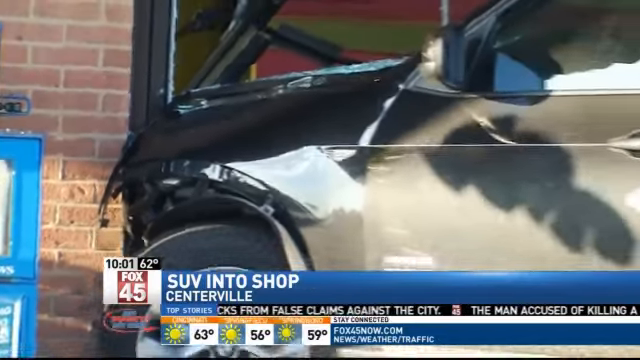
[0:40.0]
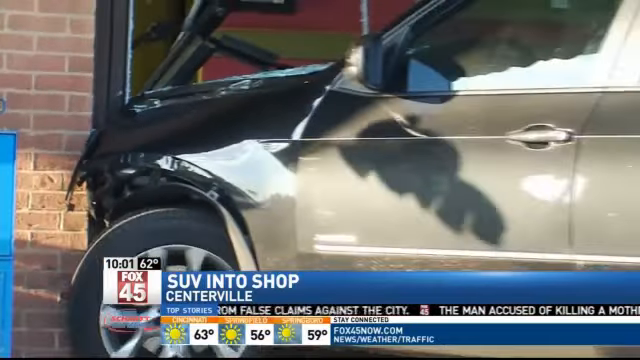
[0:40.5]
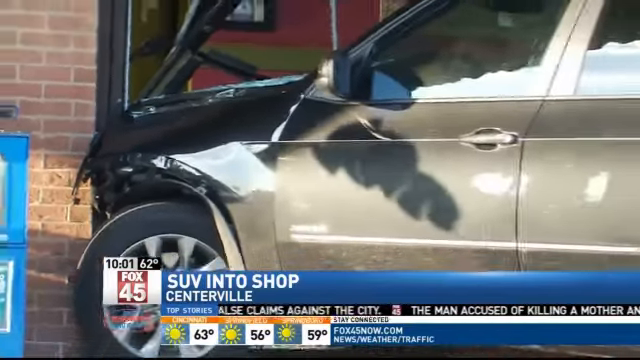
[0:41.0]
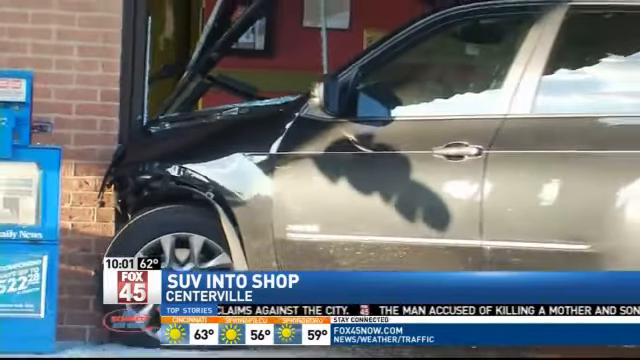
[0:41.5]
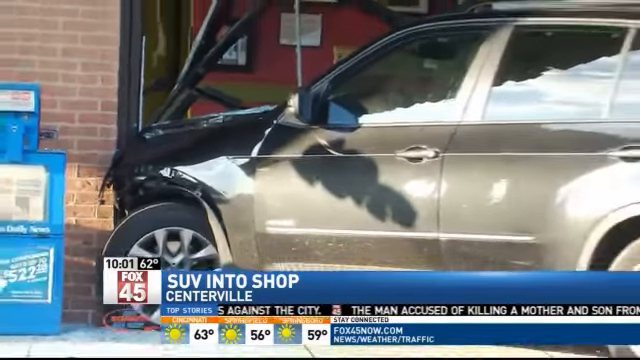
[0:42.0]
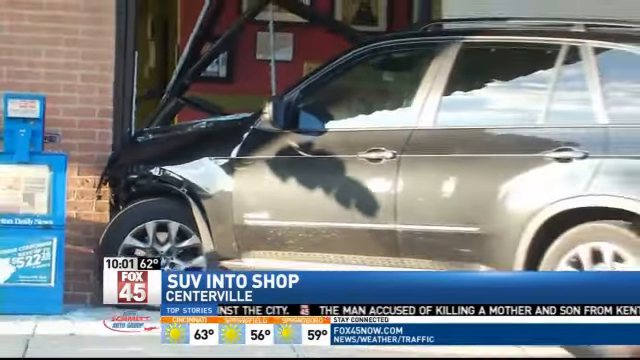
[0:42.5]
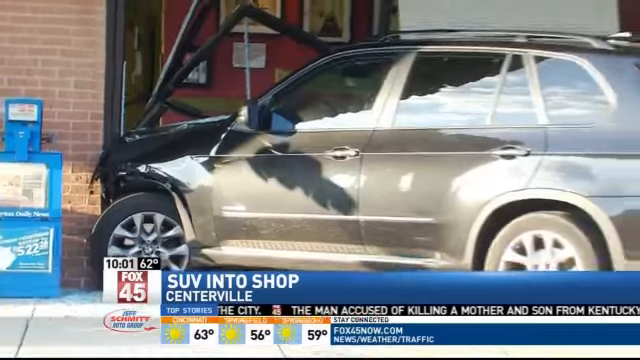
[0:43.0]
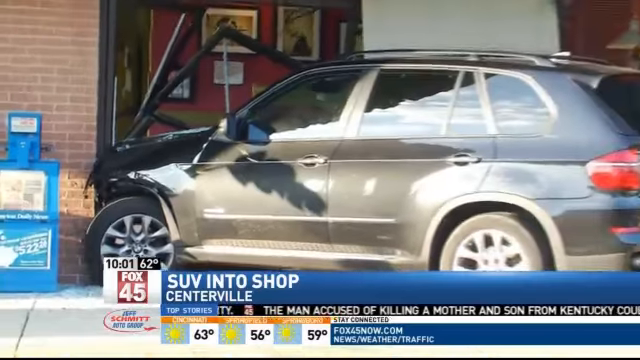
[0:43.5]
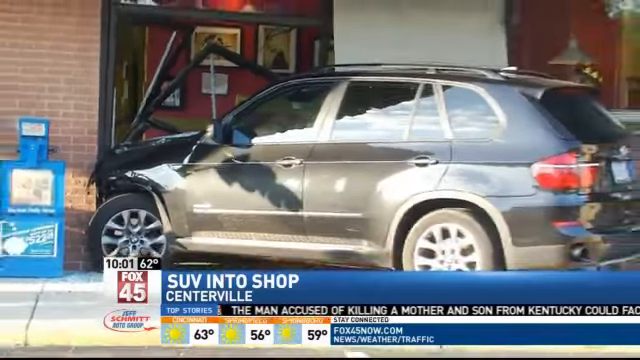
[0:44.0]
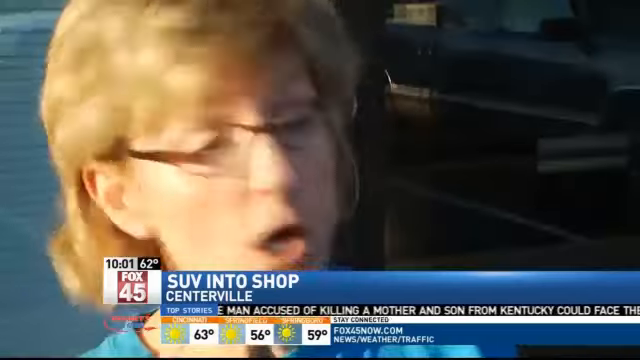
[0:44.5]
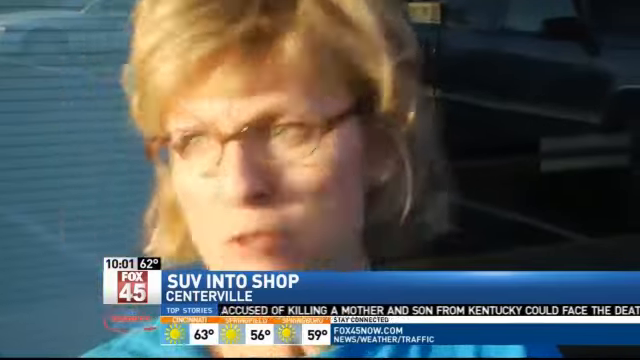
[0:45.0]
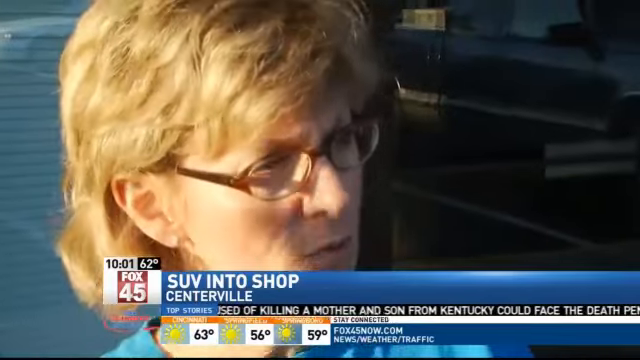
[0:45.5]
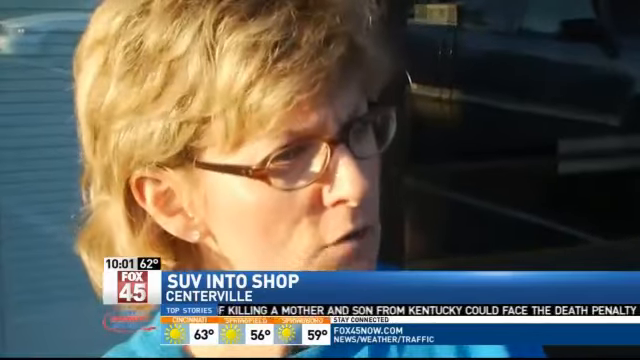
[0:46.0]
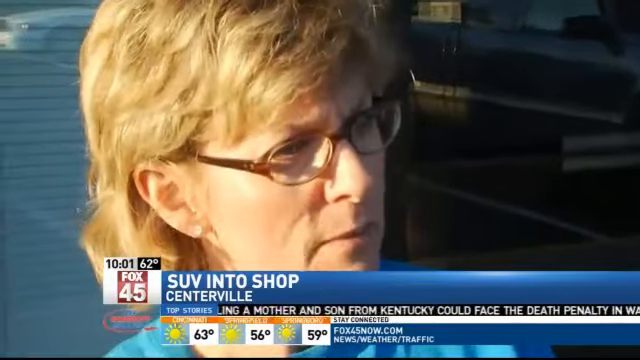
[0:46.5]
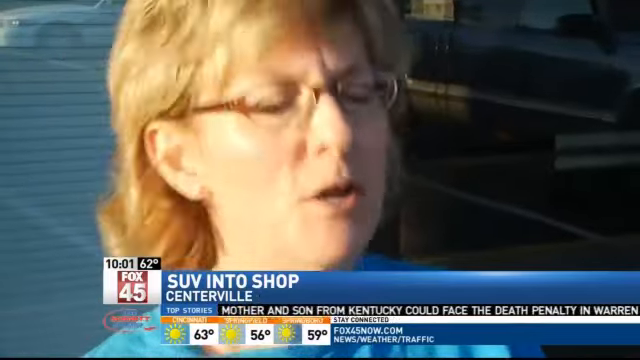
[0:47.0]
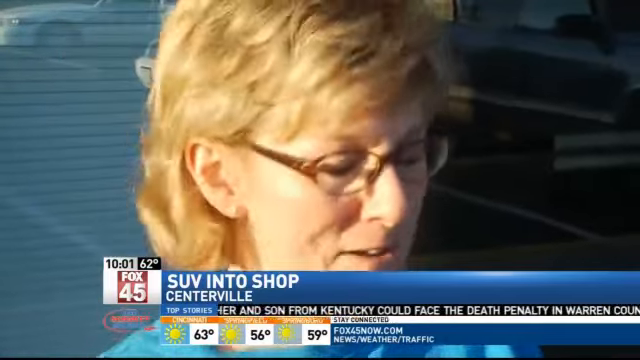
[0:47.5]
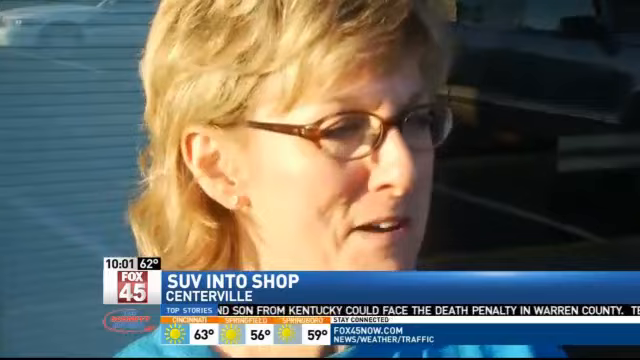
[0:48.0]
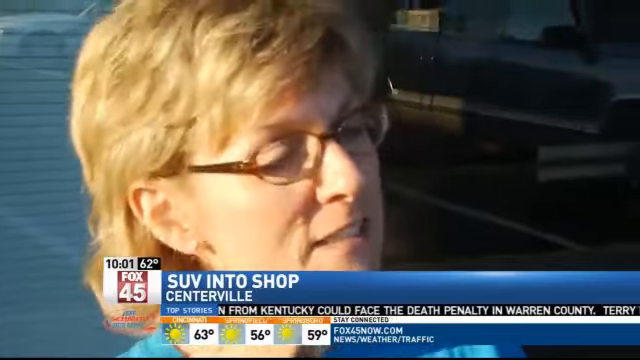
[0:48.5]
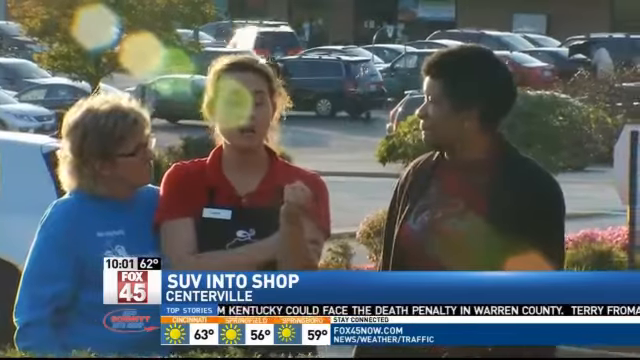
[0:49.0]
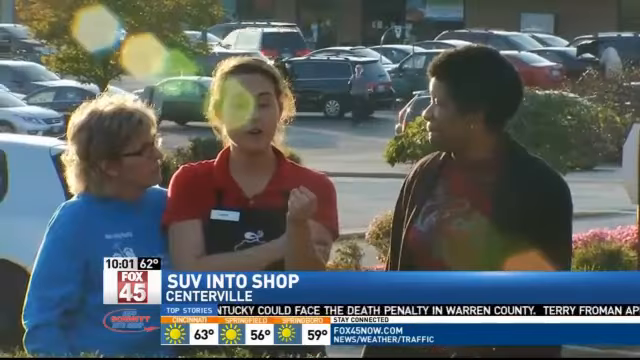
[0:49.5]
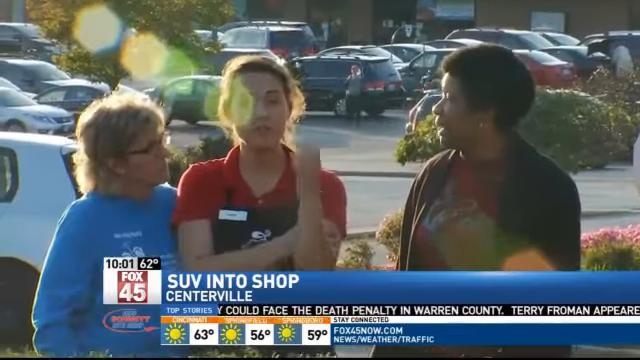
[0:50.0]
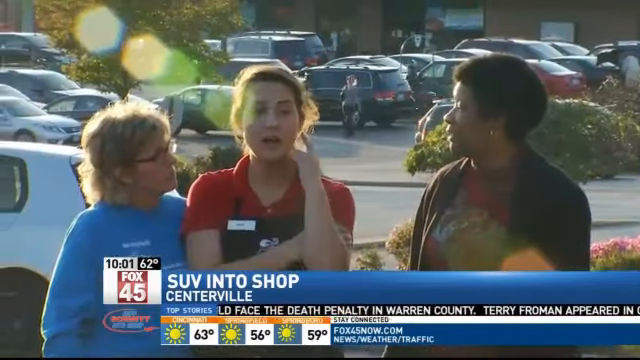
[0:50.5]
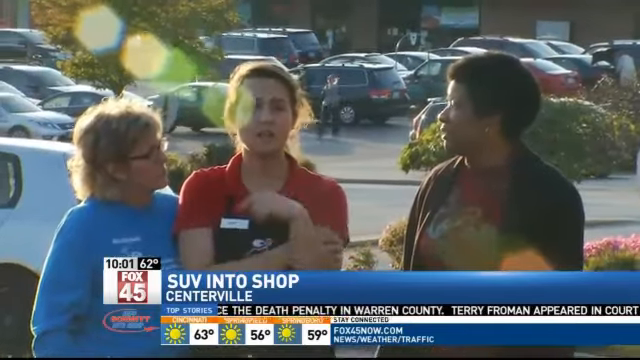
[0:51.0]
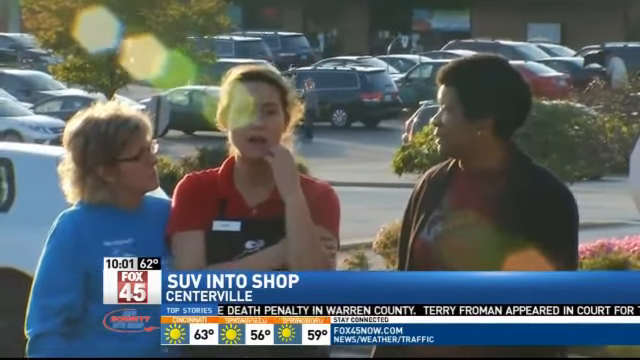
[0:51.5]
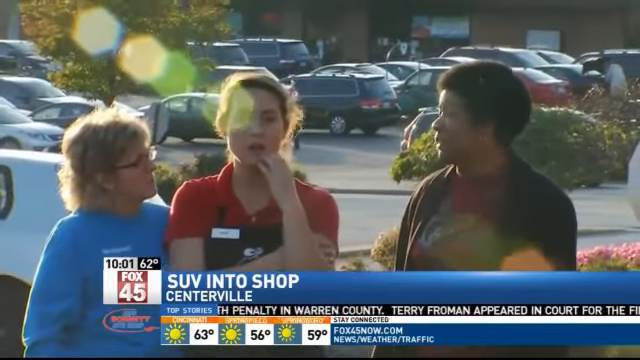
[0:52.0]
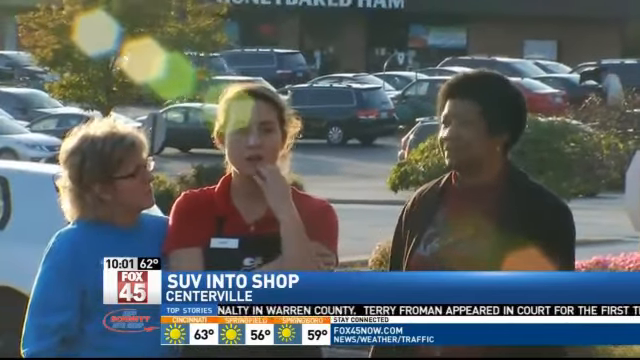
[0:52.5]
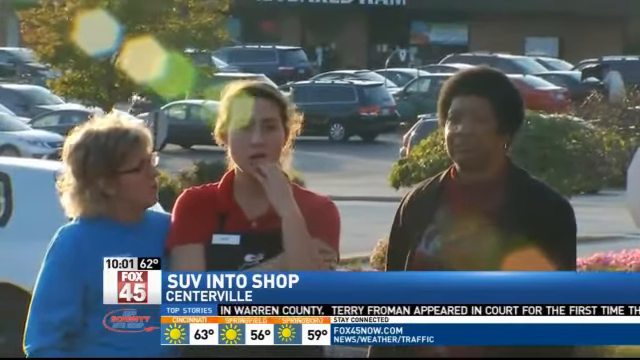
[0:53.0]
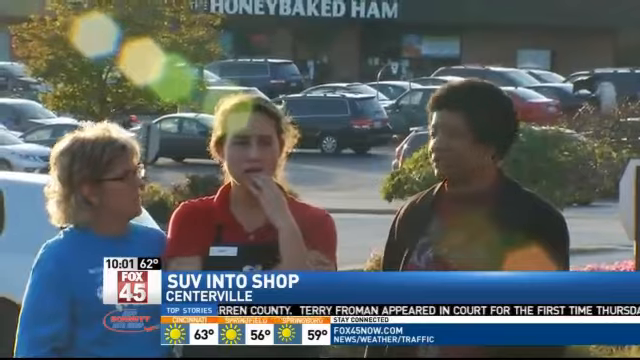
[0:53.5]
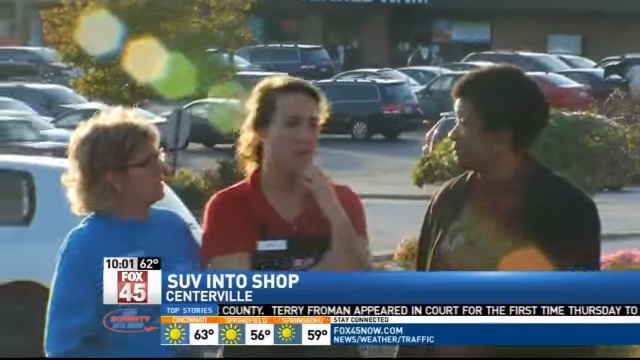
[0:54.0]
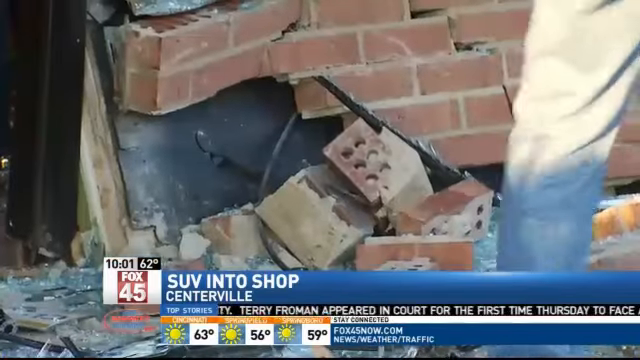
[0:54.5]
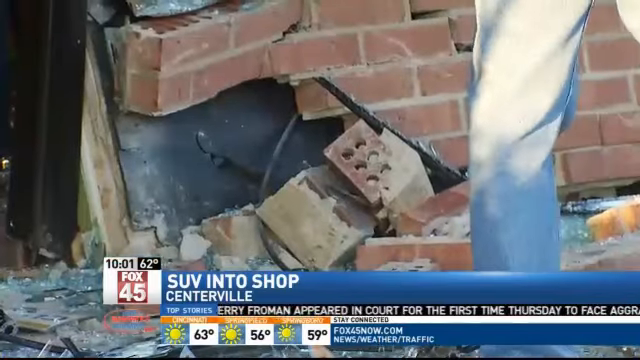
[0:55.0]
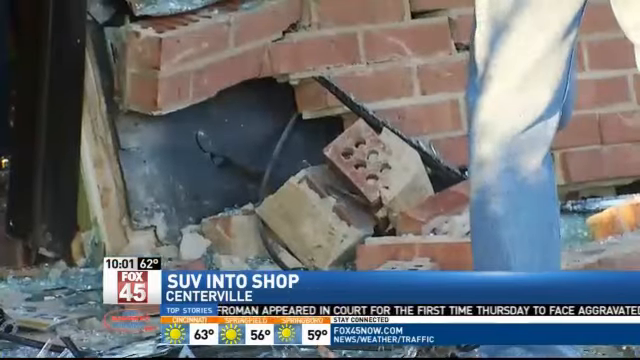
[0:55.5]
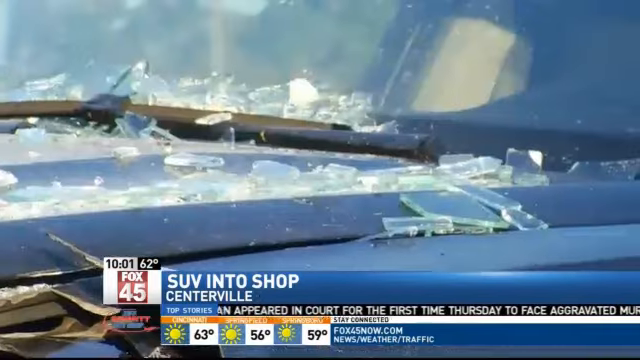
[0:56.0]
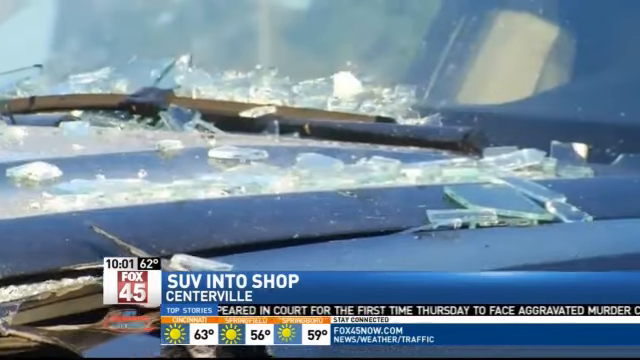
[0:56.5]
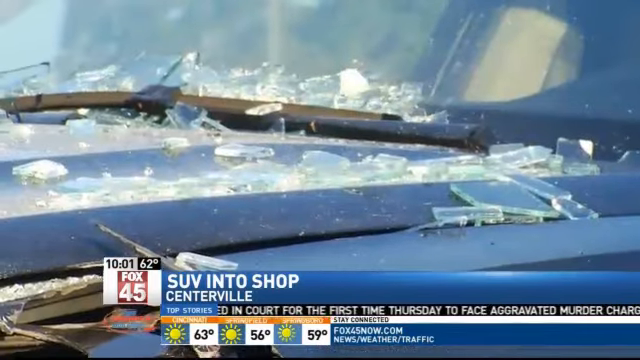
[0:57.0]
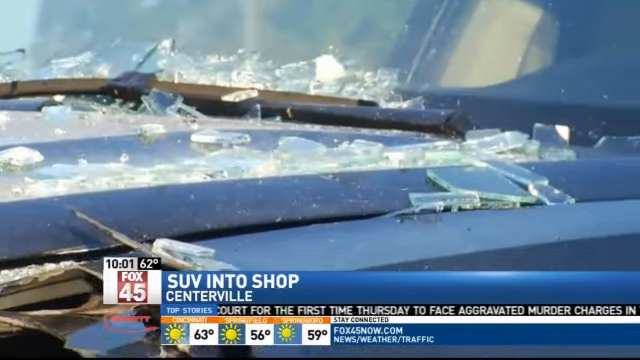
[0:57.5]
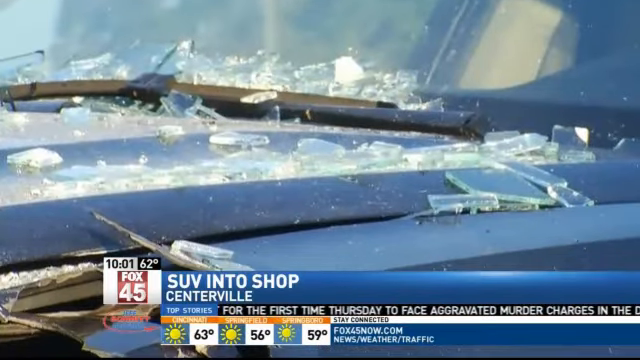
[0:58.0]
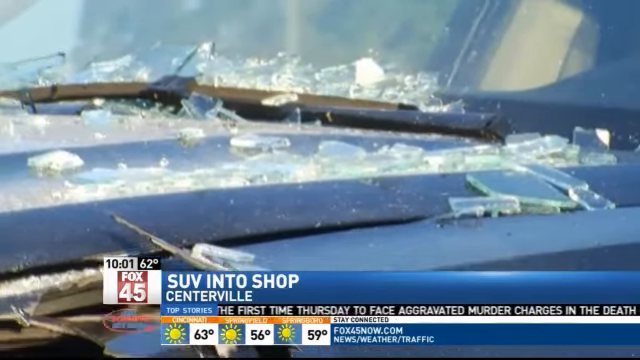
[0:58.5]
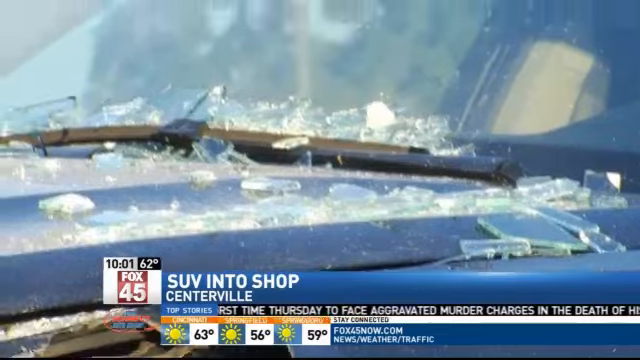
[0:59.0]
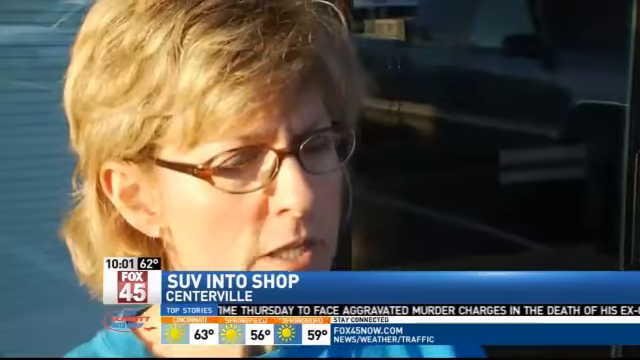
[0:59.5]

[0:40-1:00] The report is from Fox 45, with 10:01 and 62 degrees shown. The footage shows the SUV in the shop in Centerville. A woman is being interviewed, with information scrolling at the bottom of the screen and the temperatures for different parts of the day shown with sunshine. Another girl stands with the woman being interviewed. The car is very damaged, with the glass on the windshield cut up, and its front end meets the front of the shop at a door frame. The car is black with front-end damage, and its left side is in view. Next to it is a blue self-serve newspaper stand. There is broken brick. Outside, a girl in a uniform is being interviewed, apparently someone who works in the shop.